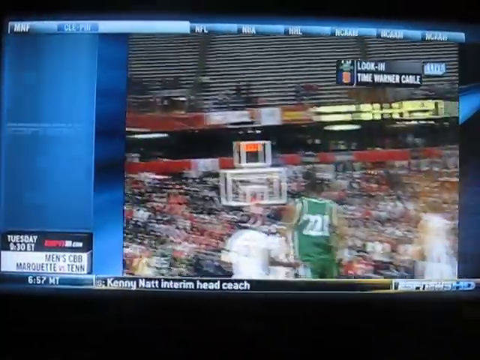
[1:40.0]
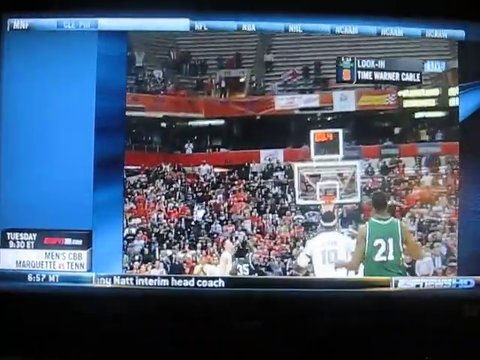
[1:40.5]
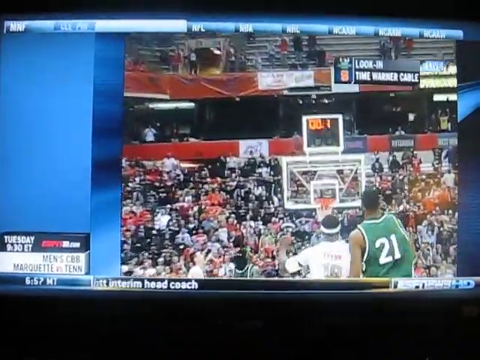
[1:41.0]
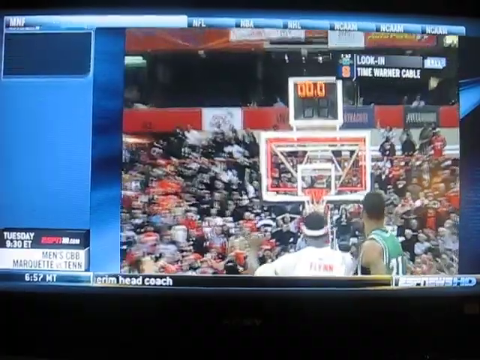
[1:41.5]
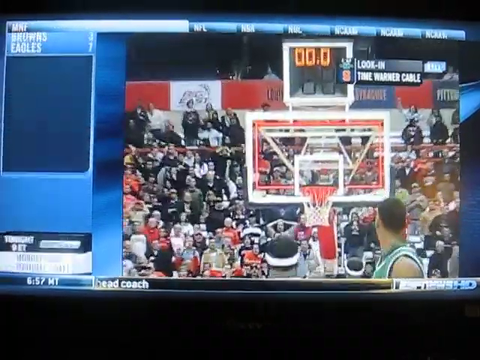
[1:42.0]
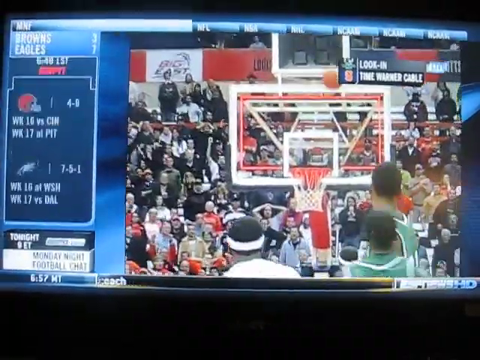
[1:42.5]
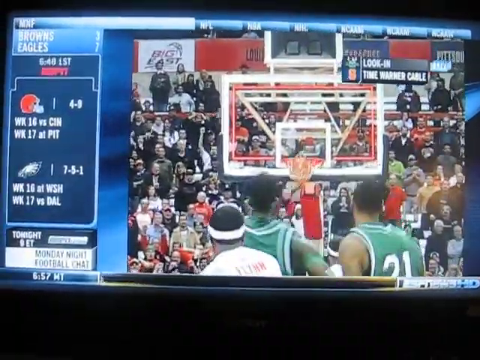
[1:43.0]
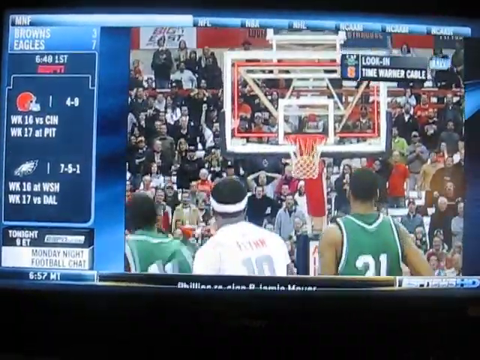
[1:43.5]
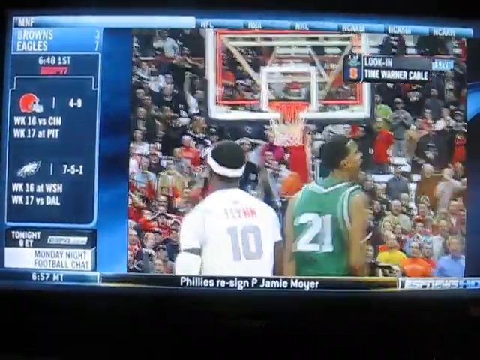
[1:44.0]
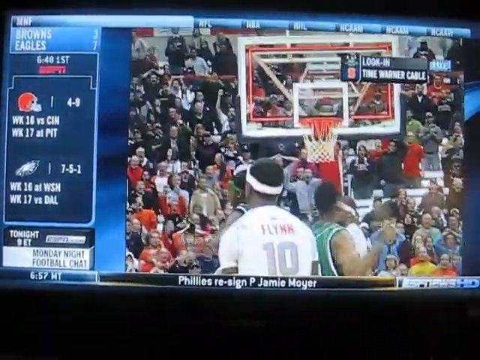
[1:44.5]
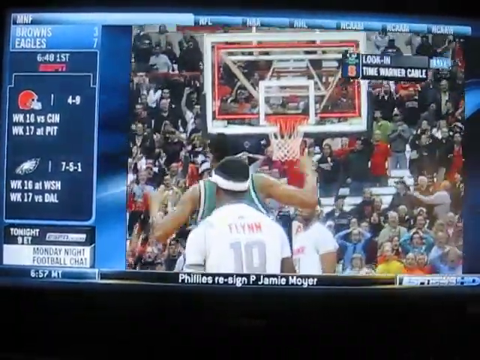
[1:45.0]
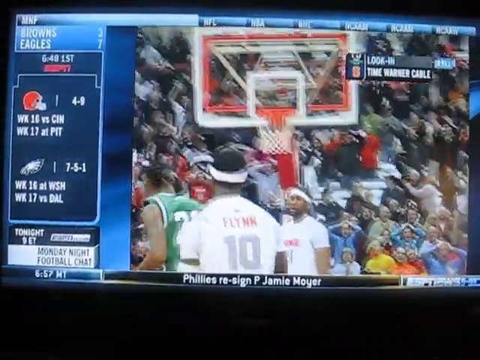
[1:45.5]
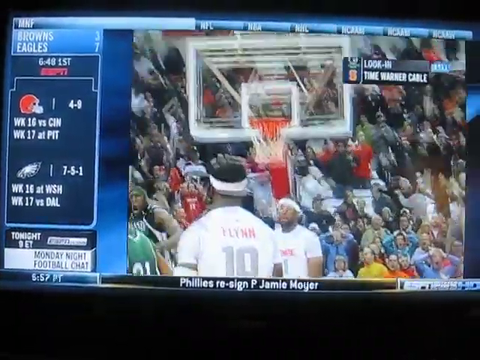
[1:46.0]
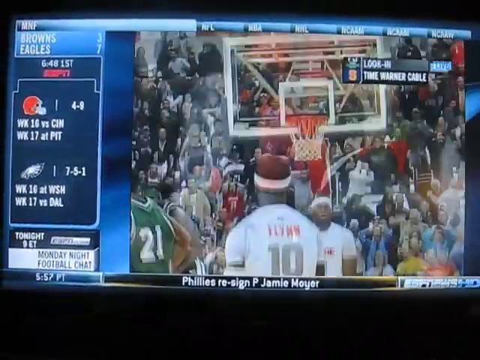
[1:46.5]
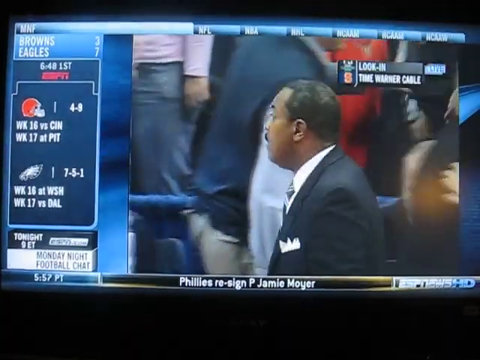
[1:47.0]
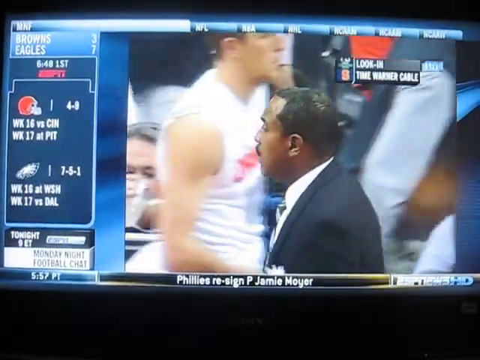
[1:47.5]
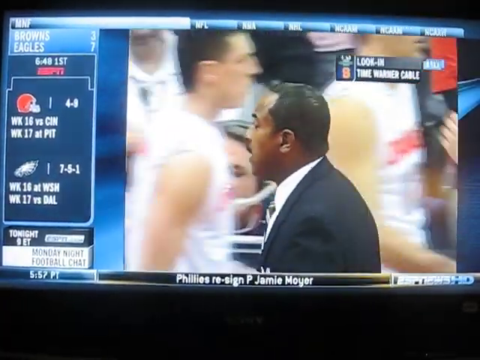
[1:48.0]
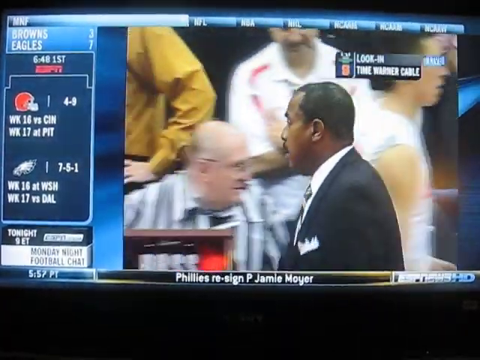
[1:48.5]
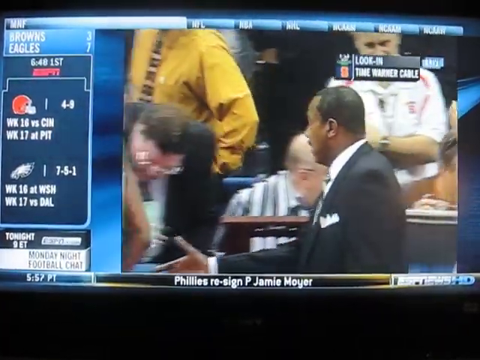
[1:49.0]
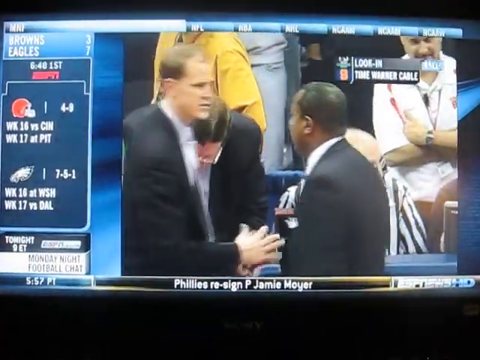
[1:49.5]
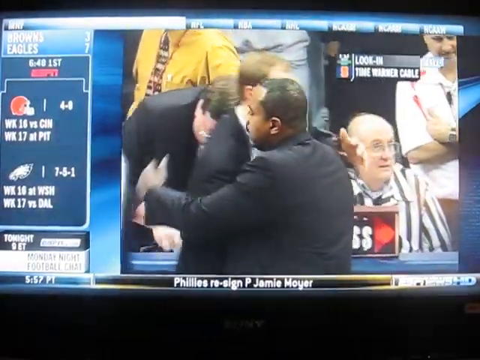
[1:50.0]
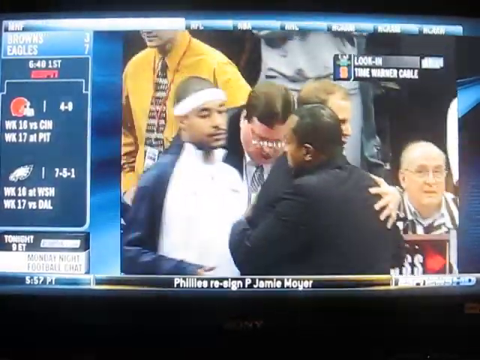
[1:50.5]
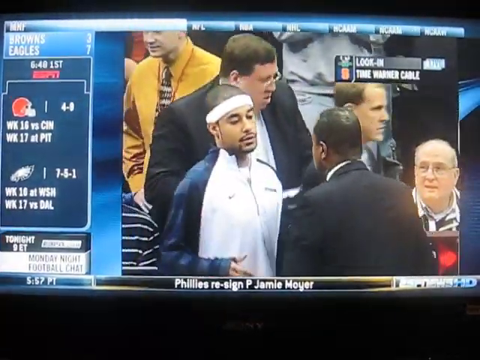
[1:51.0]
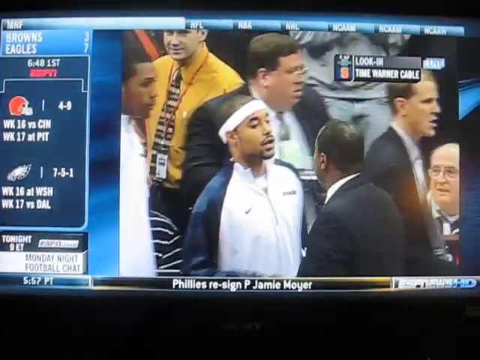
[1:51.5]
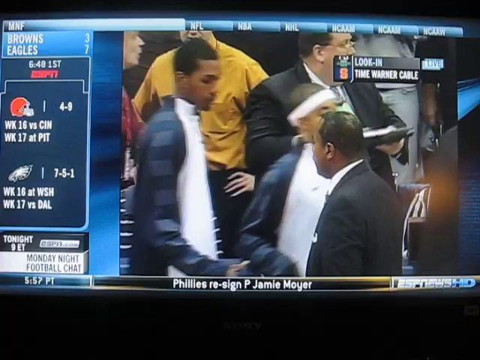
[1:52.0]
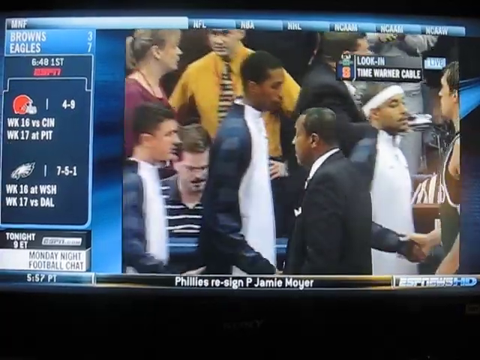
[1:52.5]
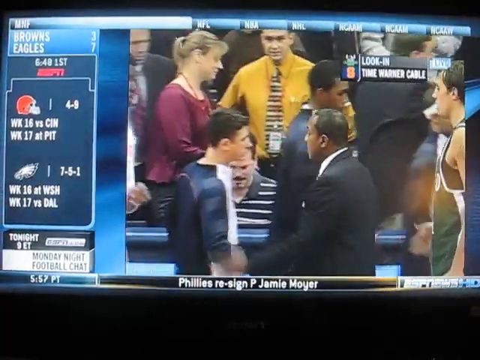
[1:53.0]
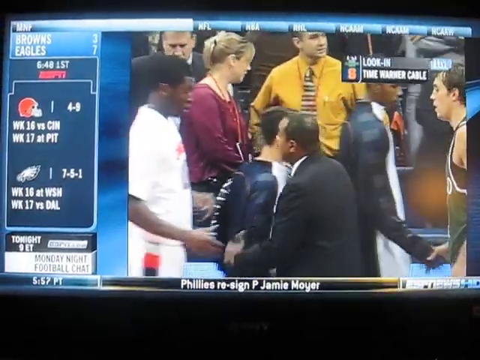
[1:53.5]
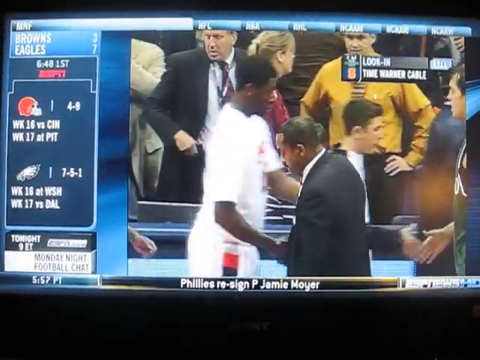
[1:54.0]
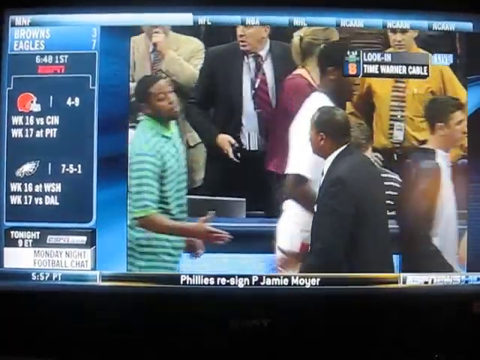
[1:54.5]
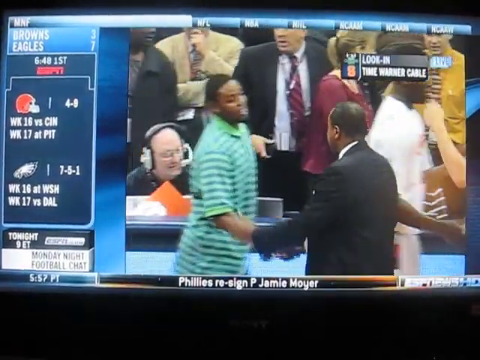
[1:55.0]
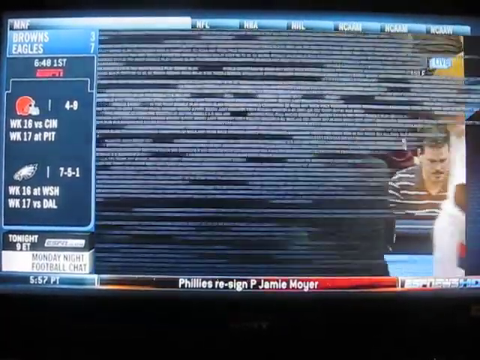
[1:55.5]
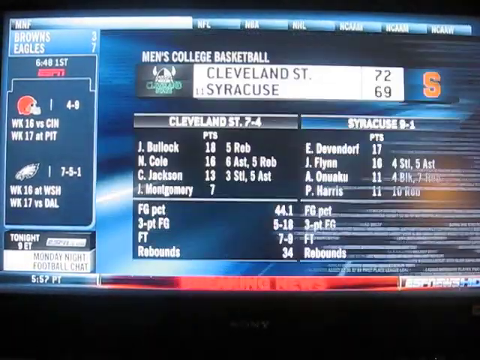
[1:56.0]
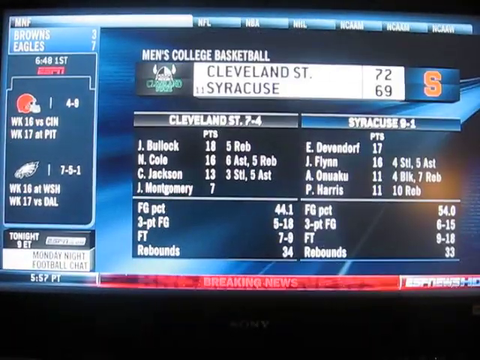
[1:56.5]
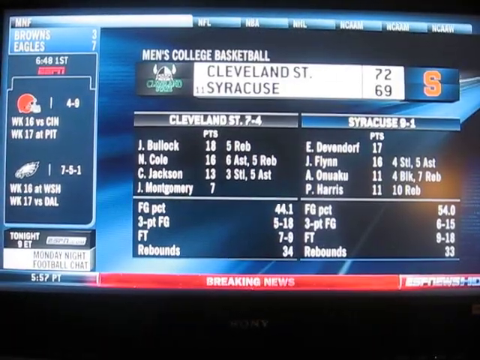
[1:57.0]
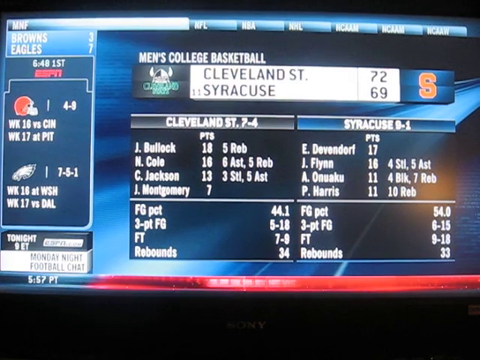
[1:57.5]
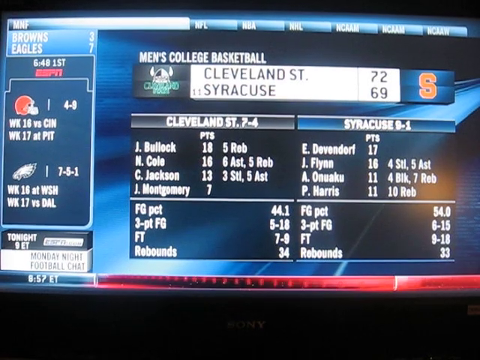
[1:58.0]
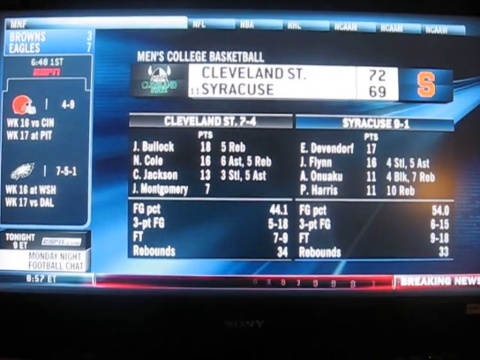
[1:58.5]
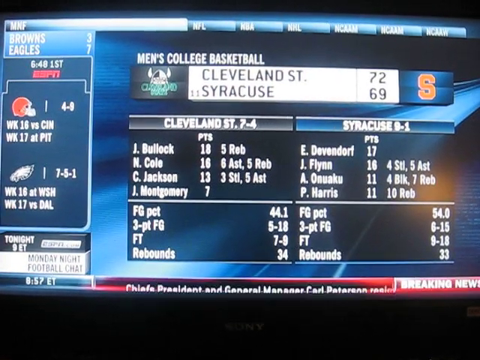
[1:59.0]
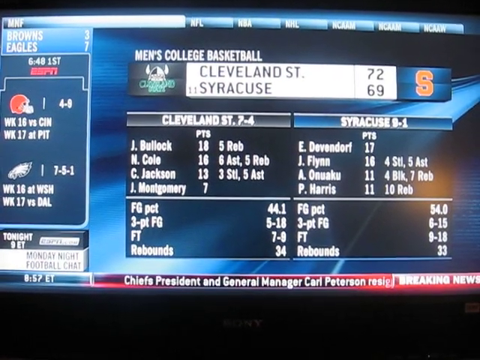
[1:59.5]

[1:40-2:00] In the final seconds, a player in a green jersey, number 20, throws the ball into the basket, then jumps up, lifts his arms in victory and bounces. The shot shows the coach in the black suit and white dress shirt turned to the left as a player in a white jersey walks past him. The coach shakes hands with a white man dressed similarly, then a man in a zipped-up Nike jacket with a white headband shakes the coach's hand, followed by all the players in white jerseys. A scoreboard then reads "Men's College Basketball, Cleveland 72, Syracuse 69" with the breakdown of points for each team.